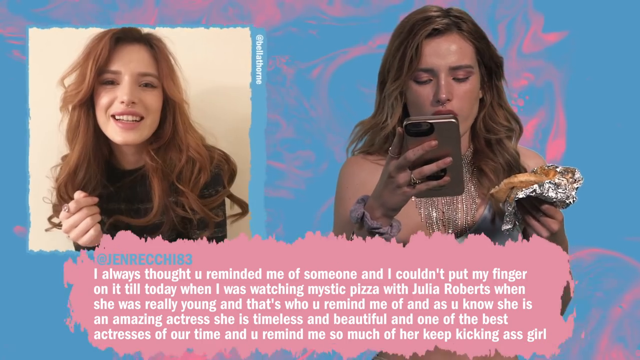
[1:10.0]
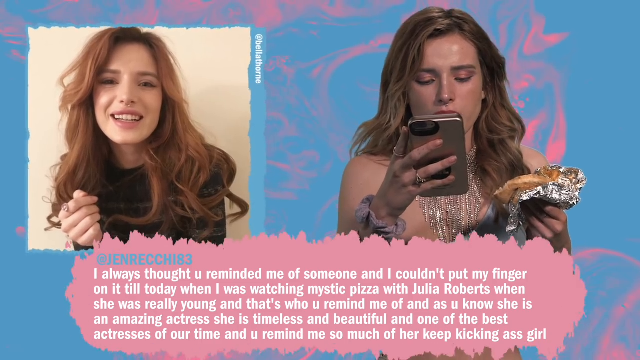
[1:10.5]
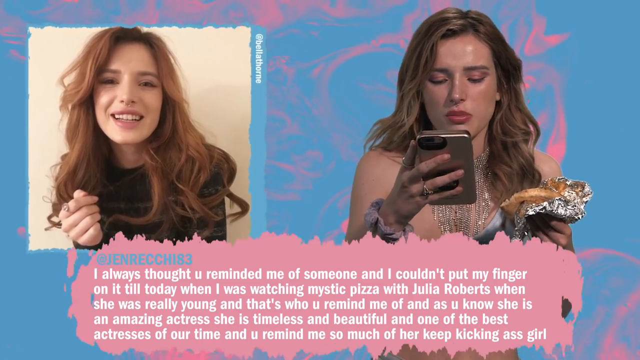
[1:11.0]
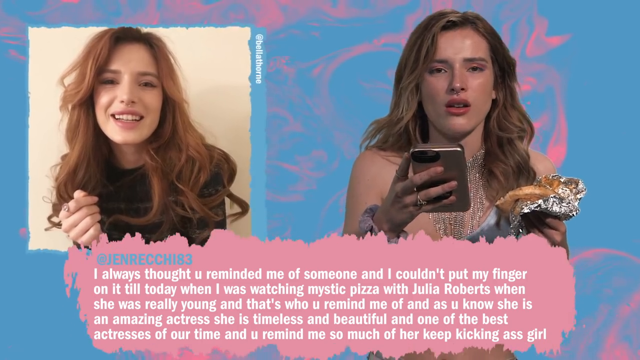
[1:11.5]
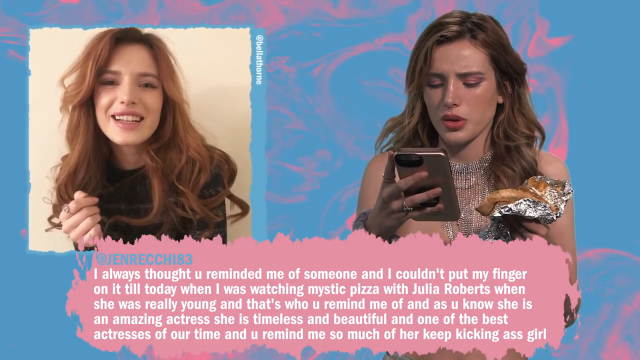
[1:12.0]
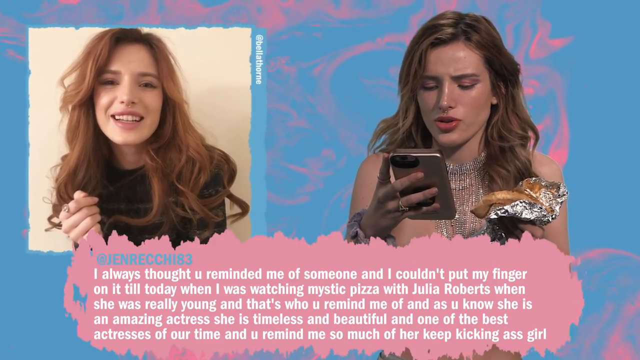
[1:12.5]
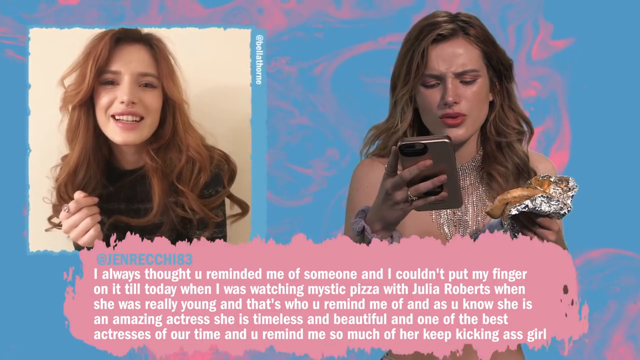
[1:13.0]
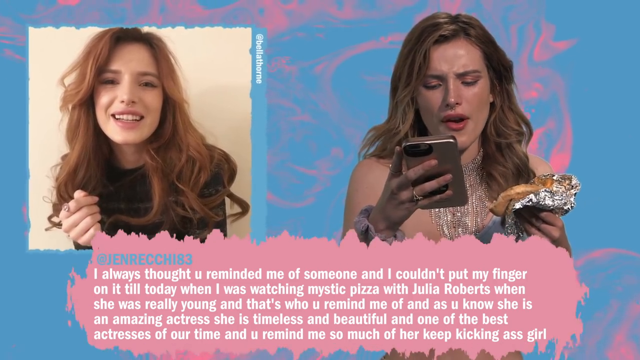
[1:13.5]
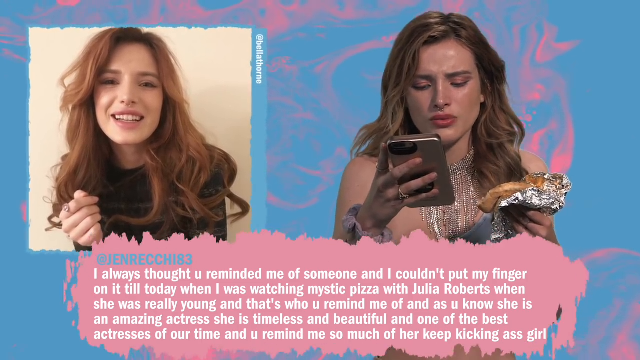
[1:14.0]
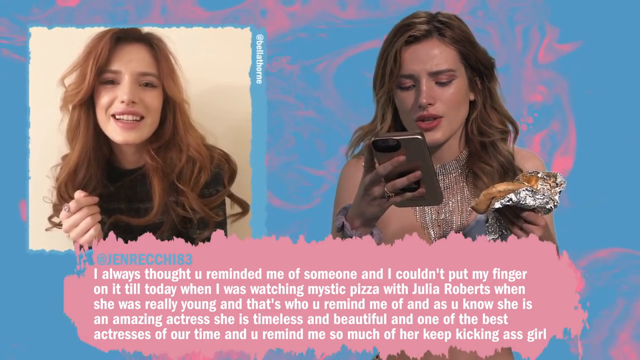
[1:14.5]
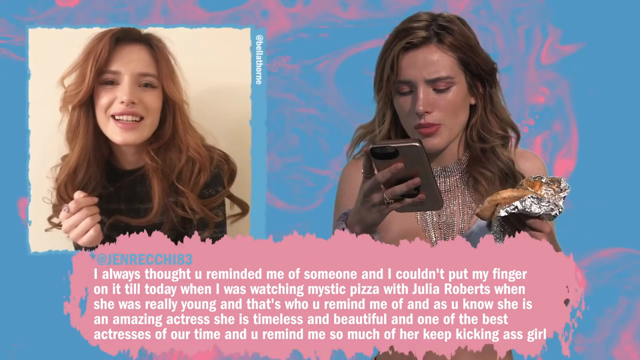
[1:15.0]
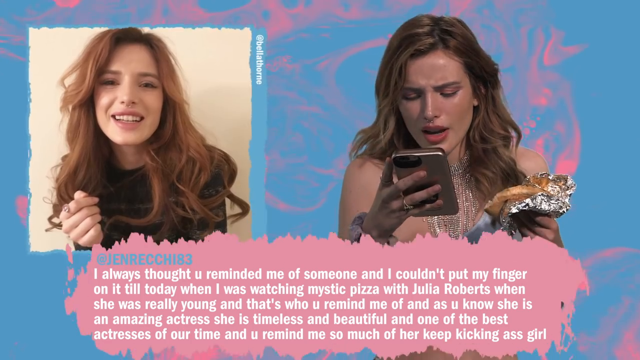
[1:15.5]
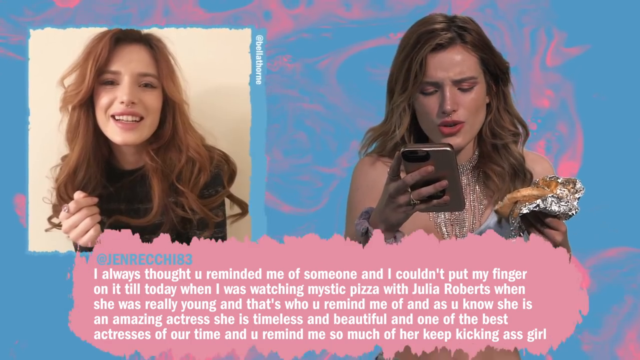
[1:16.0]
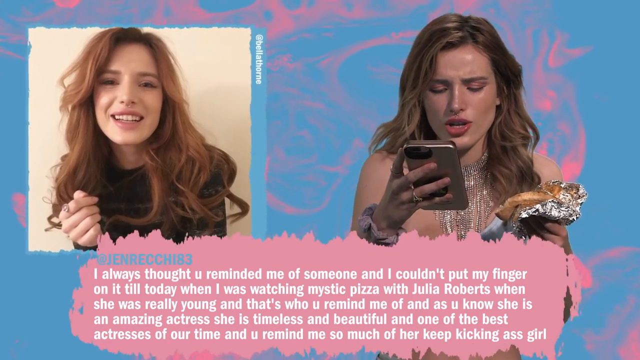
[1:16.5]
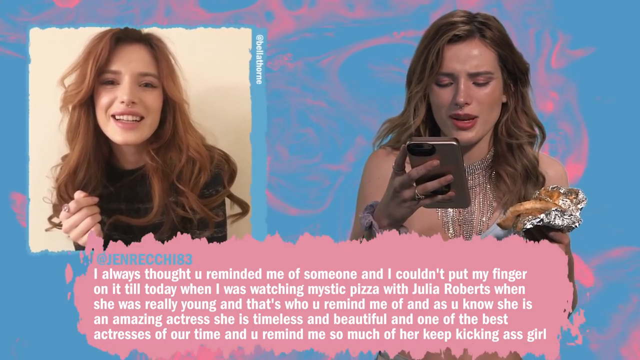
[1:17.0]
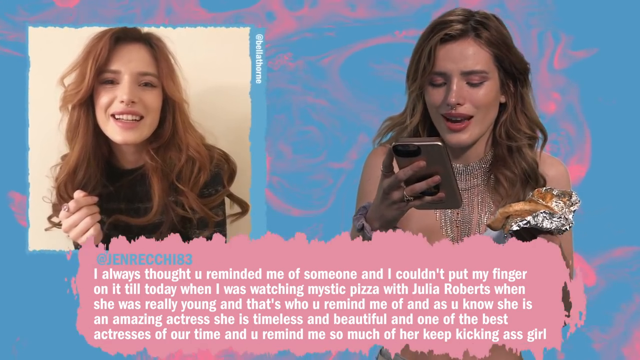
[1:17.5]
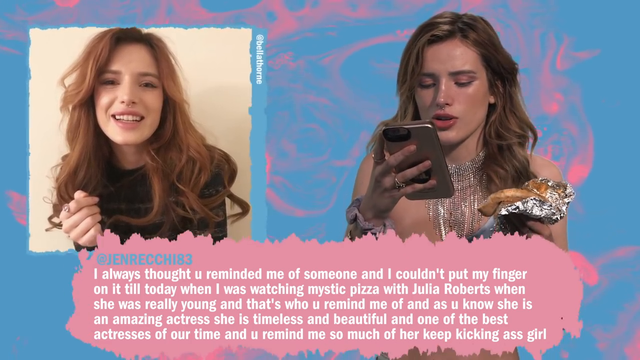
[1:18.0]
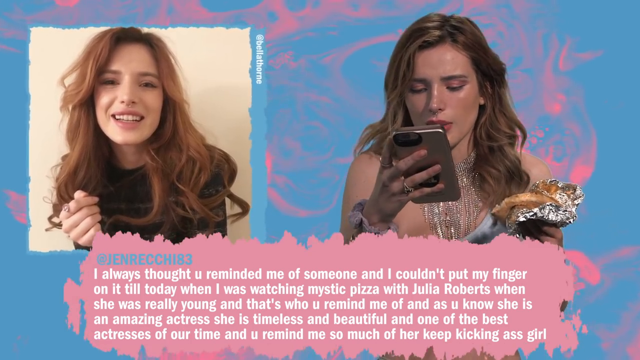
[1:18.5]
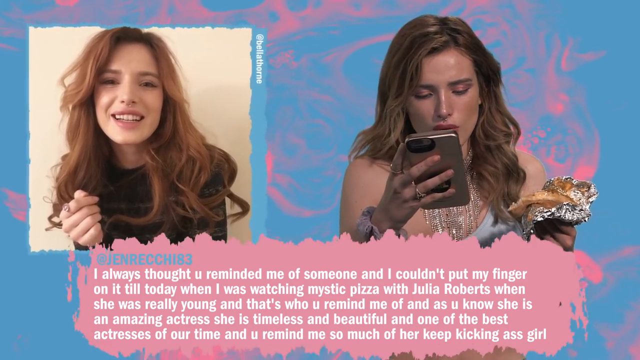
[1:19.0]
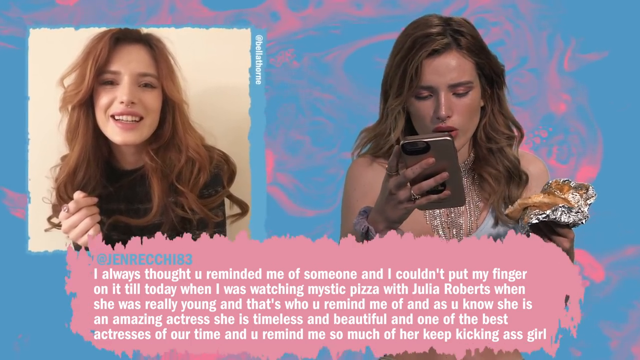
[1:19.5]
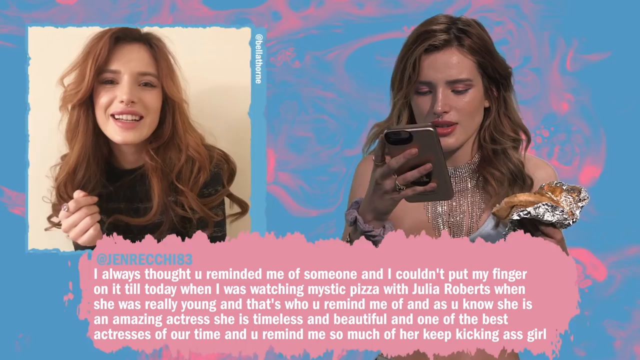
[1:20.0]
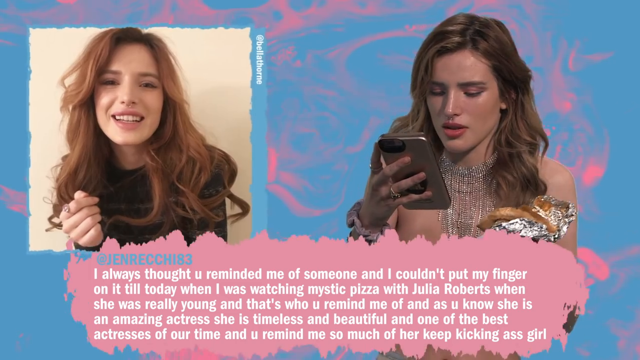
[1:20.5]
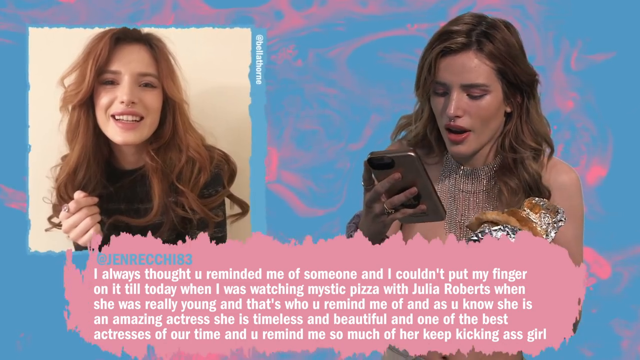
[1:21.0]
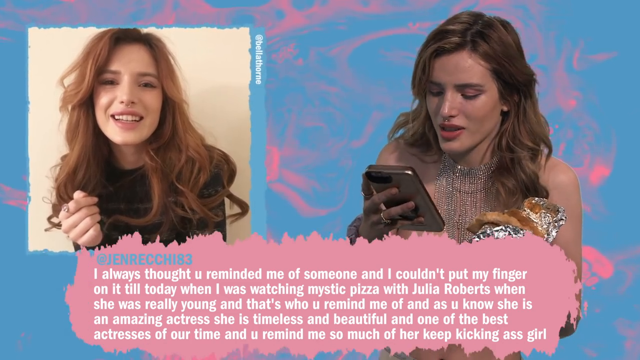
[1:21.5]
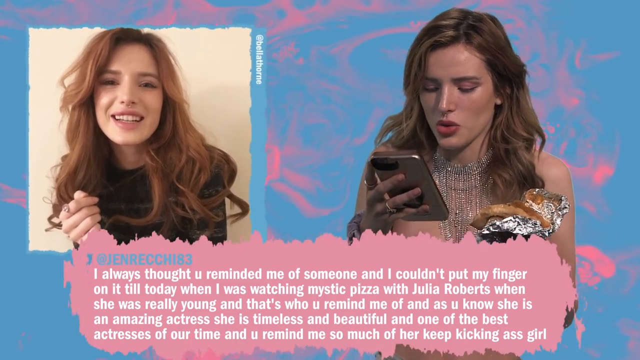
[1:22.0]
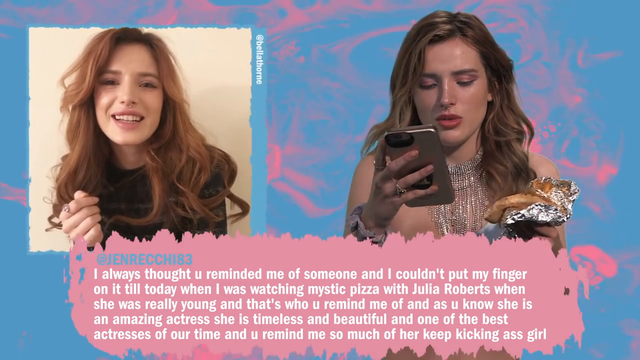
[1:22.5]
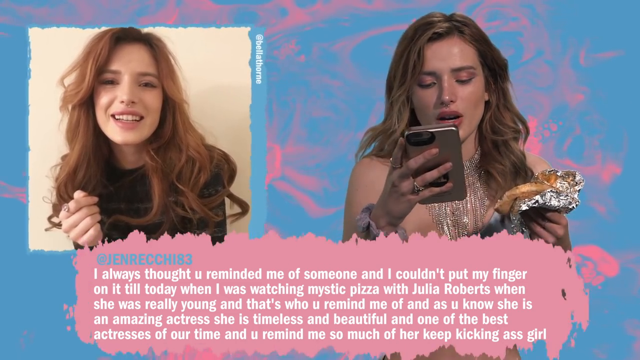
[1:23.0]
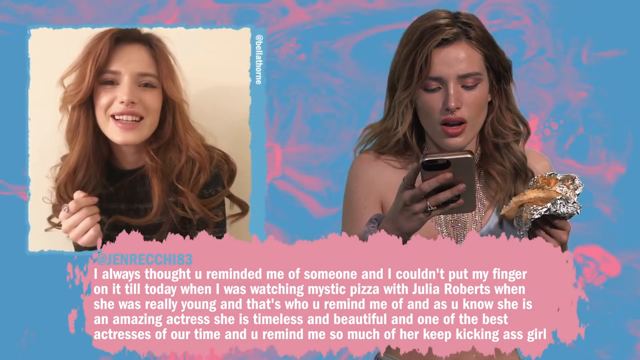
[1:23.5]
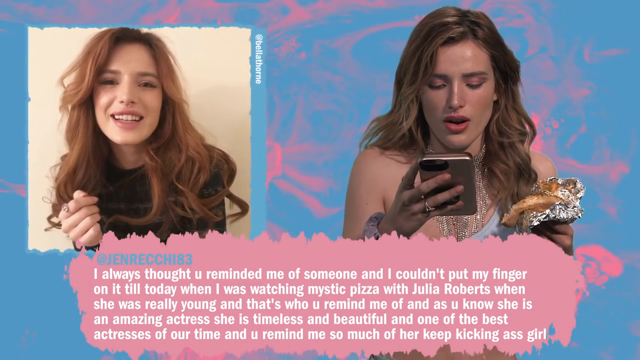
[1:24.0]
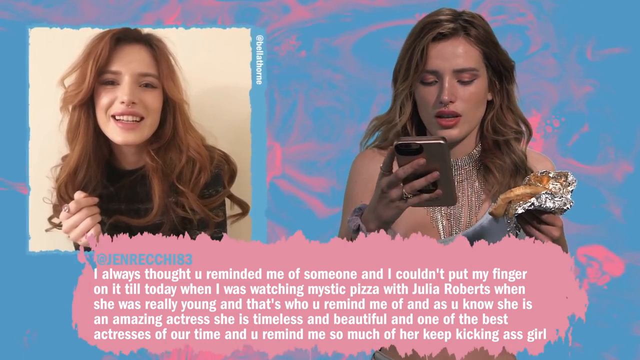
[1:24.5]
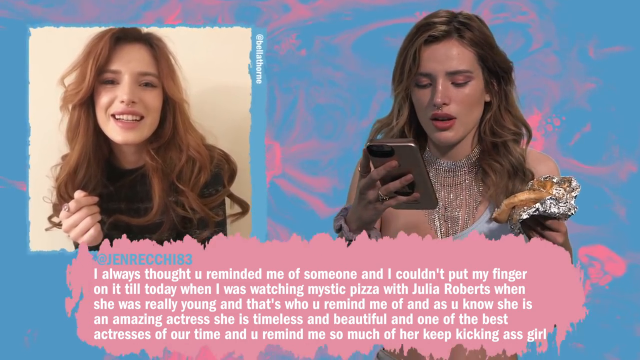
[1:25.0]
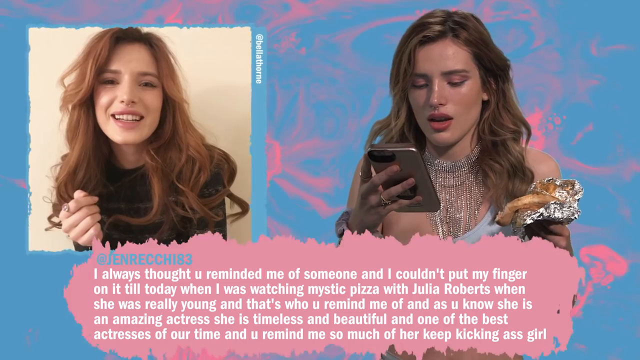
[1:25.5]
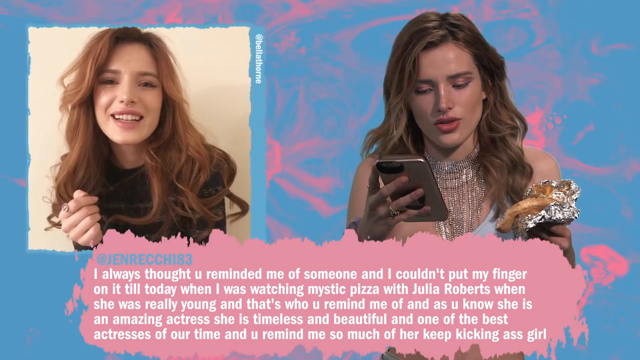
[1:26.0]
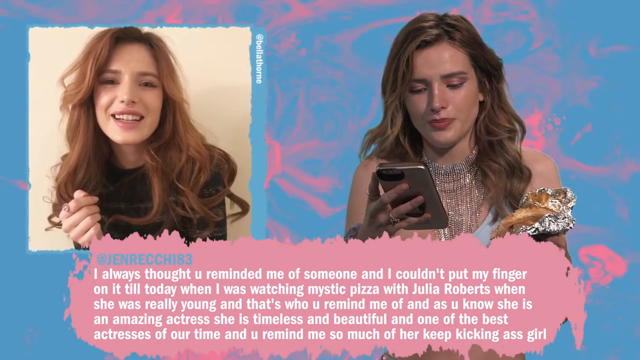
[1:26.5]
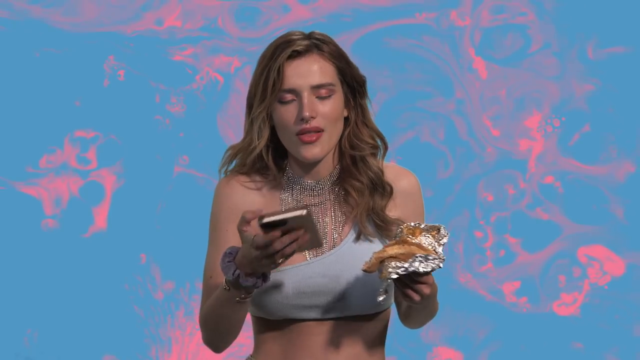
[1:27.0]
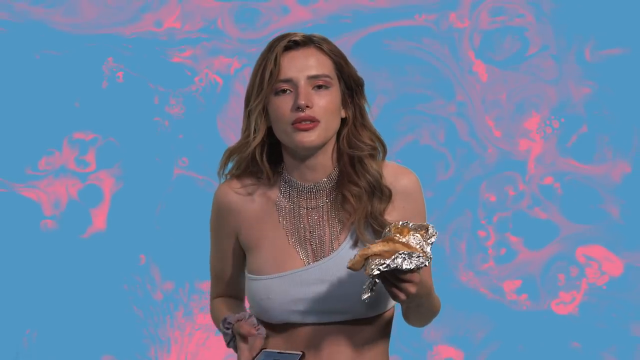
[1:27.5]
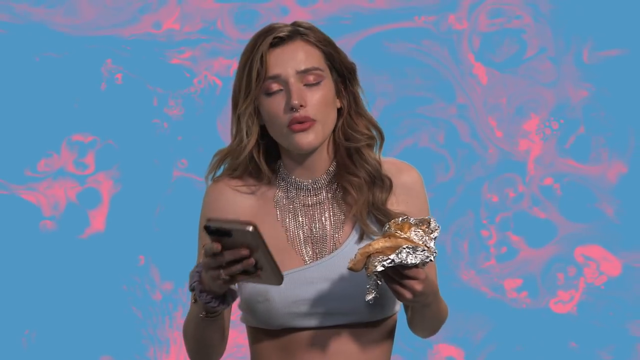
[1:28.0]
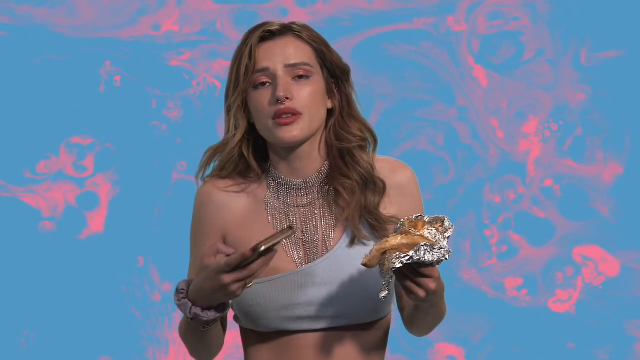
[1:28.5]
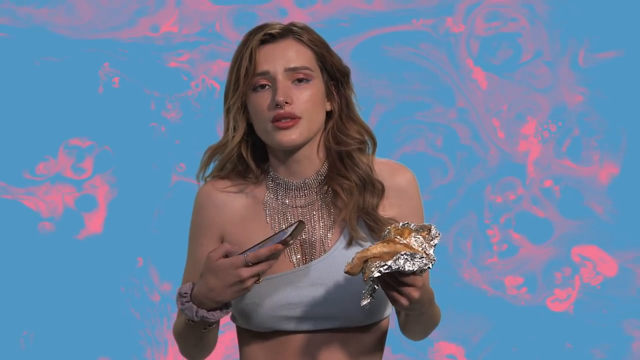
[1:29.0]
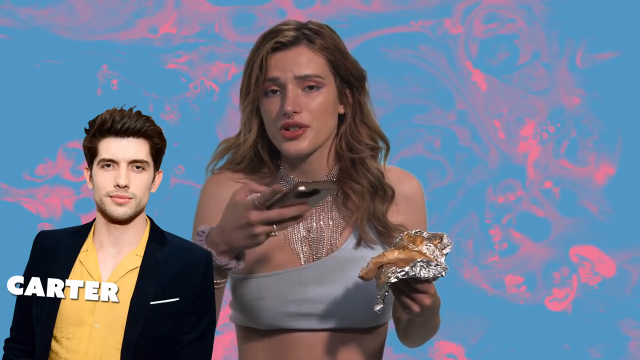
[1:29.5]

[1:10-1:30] Bella Thorne holds a hot dog in her left hand and her phone in her right. The background is still blue with touches of pink. On the left part of the screen is her social media photograph in a vibrant light blue outline. In the bottom corner of the screen is the comment she is reading, in a purple font, with the commenter's username in light blue text and the comment in white text. Her expression is full of surprise as she reads. After finishing, she looks at the camera and seems to explain something, possibly about liking Julia Roberts or how she feels about the comment. Later, an image of a person appears in the lower left corner with text naming him Carter Jenkins. He wears a dark blue jacket with a yellow shirt, has a lightly trimmed beard, and seems to be famous.